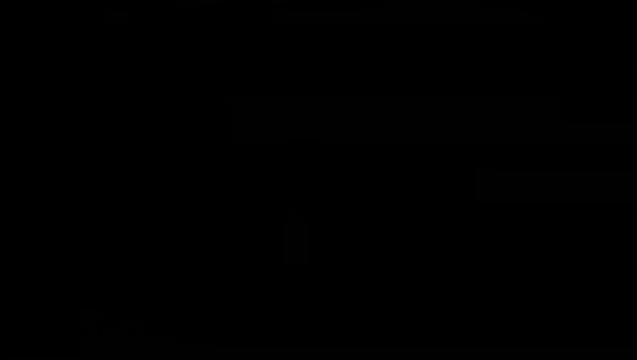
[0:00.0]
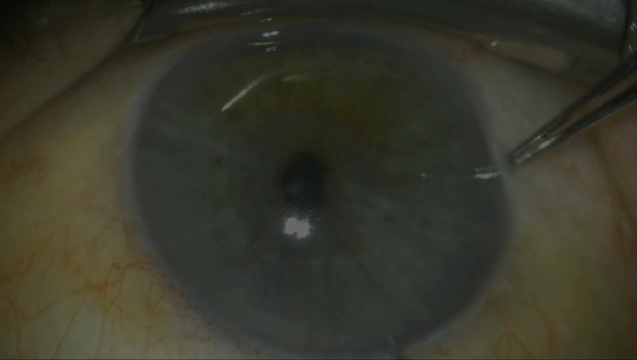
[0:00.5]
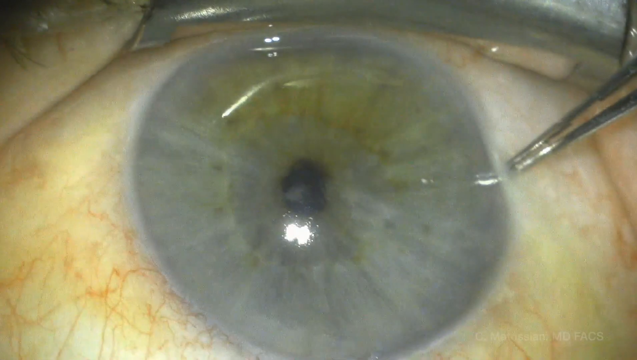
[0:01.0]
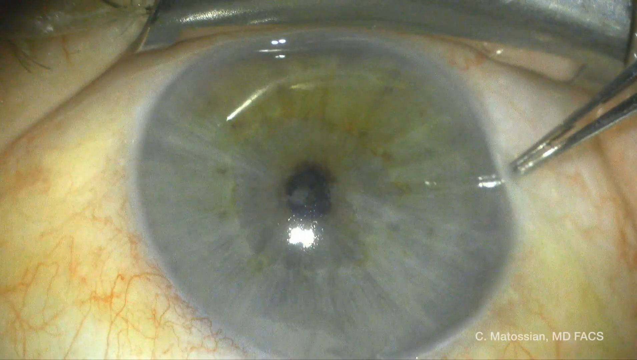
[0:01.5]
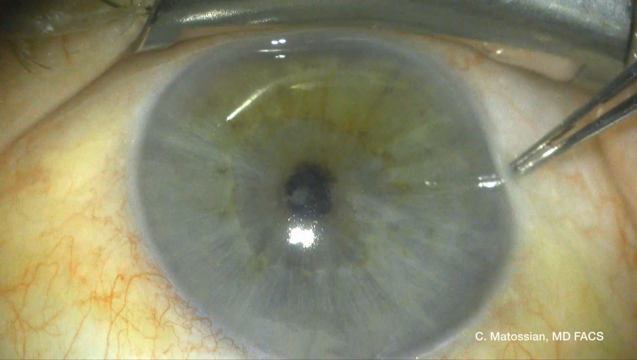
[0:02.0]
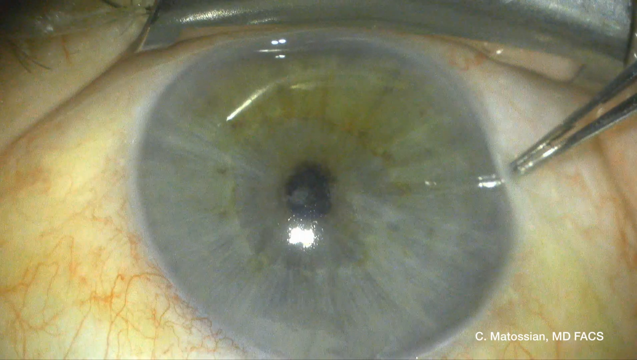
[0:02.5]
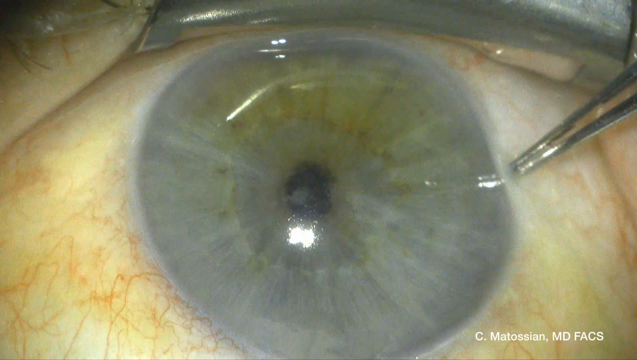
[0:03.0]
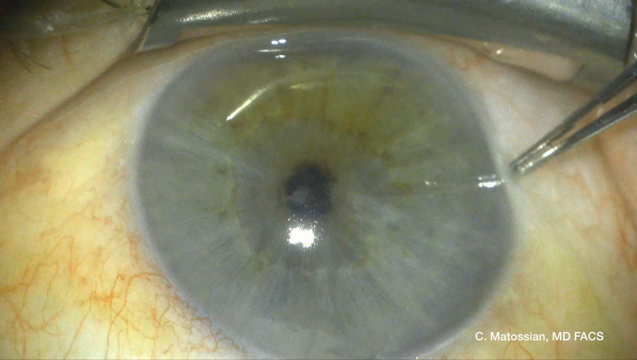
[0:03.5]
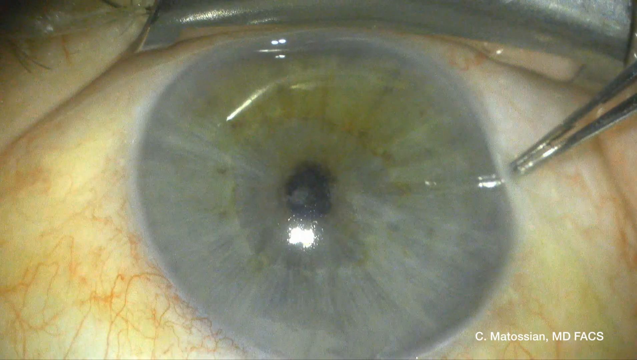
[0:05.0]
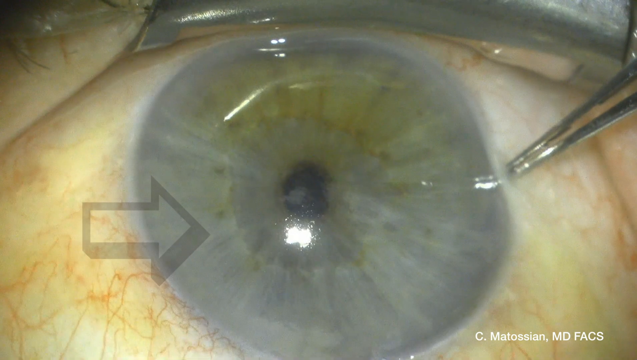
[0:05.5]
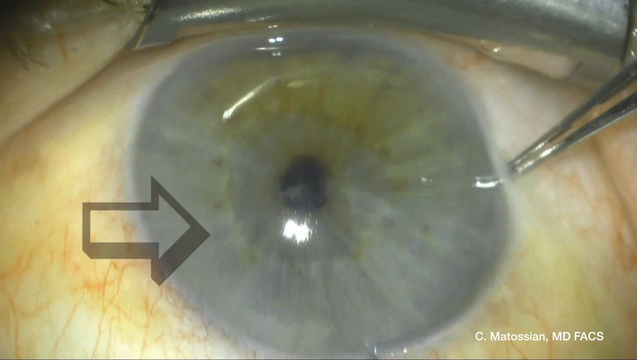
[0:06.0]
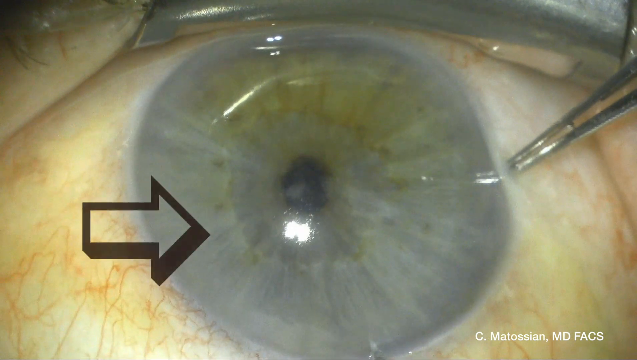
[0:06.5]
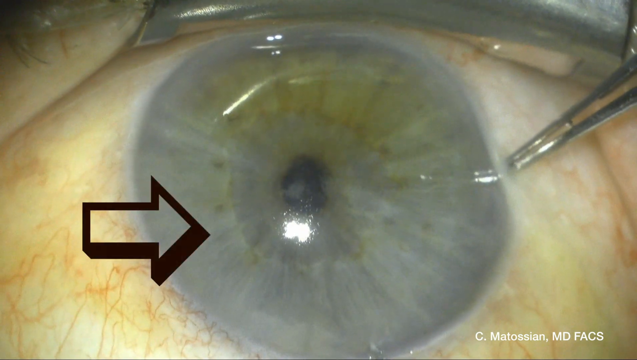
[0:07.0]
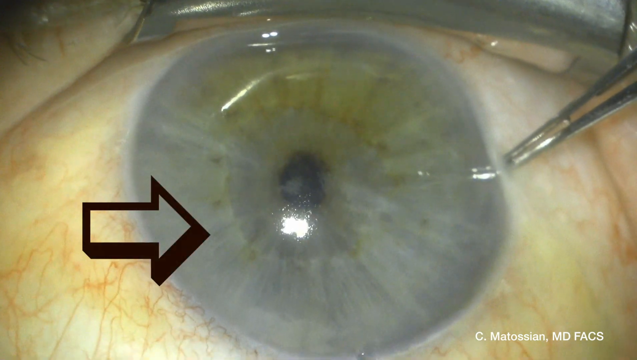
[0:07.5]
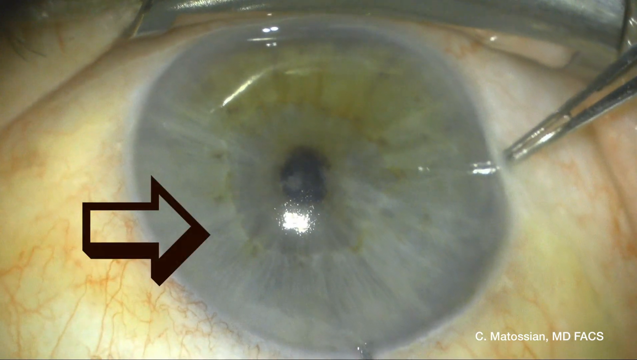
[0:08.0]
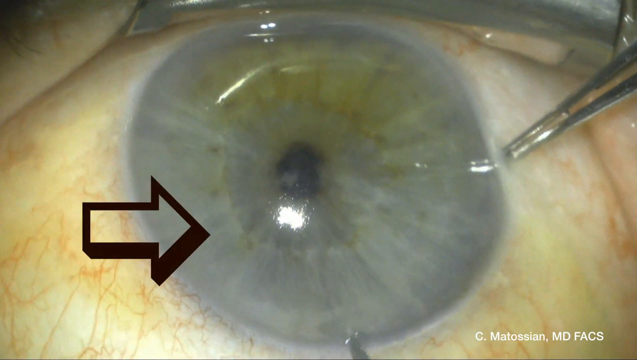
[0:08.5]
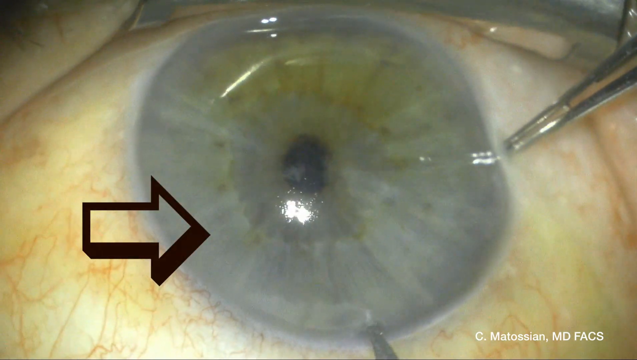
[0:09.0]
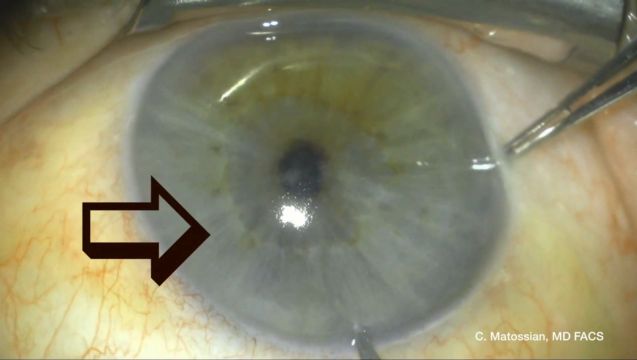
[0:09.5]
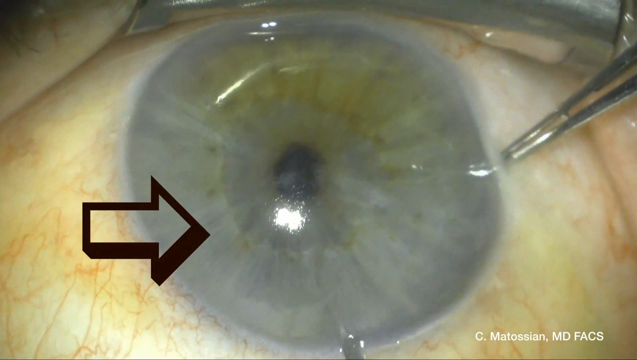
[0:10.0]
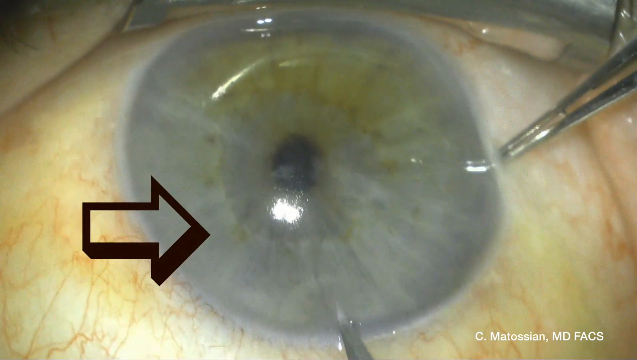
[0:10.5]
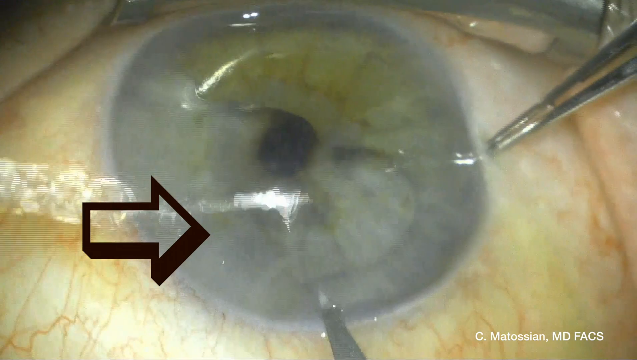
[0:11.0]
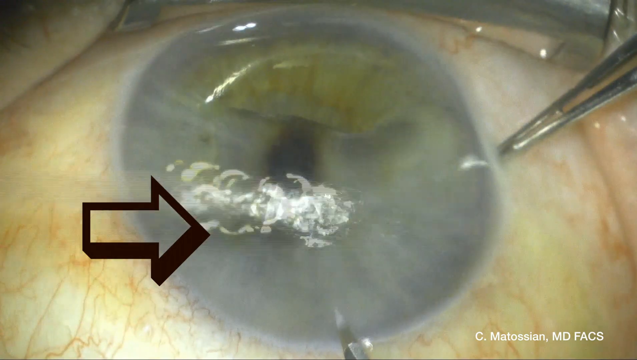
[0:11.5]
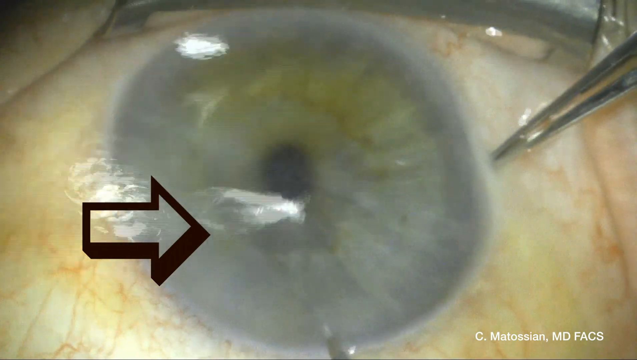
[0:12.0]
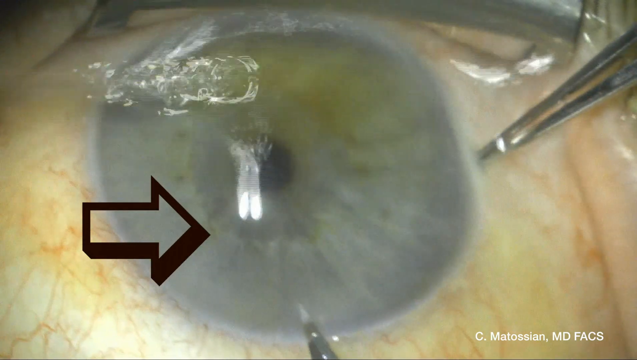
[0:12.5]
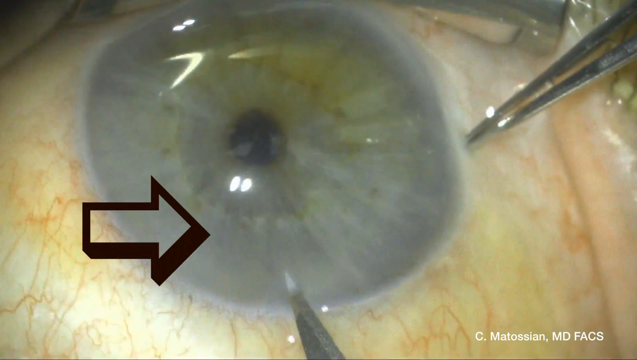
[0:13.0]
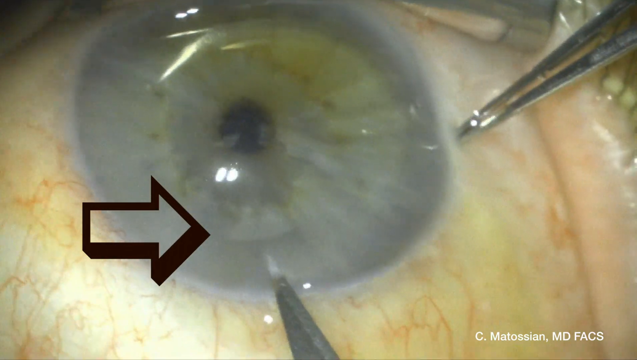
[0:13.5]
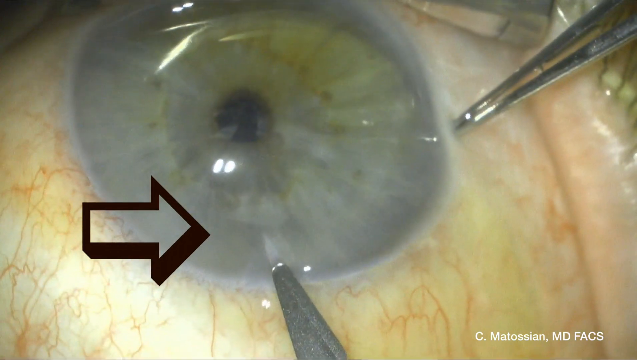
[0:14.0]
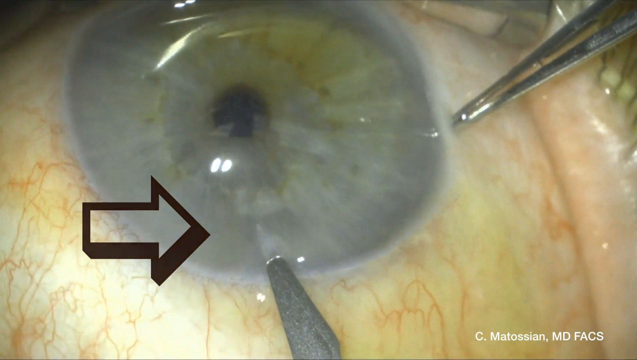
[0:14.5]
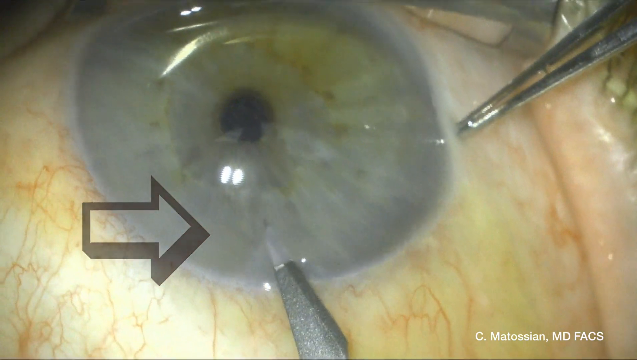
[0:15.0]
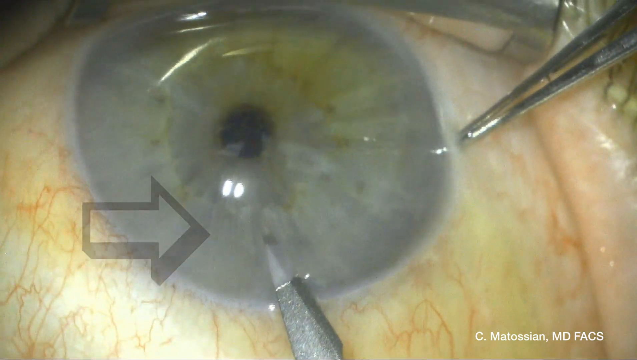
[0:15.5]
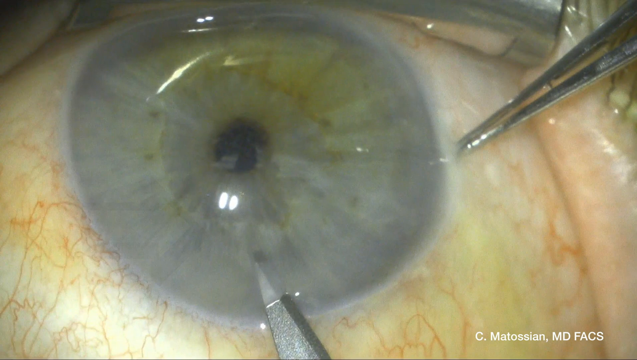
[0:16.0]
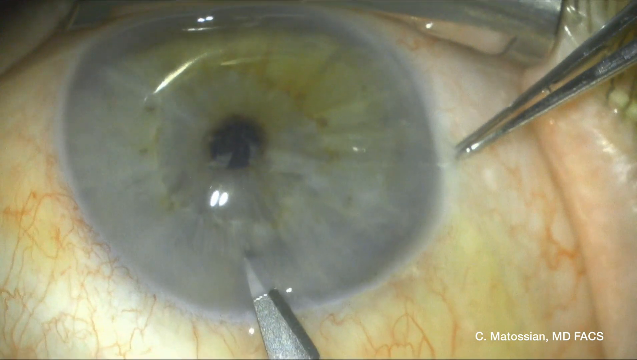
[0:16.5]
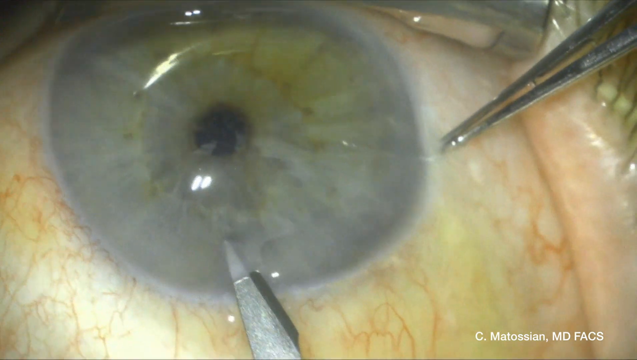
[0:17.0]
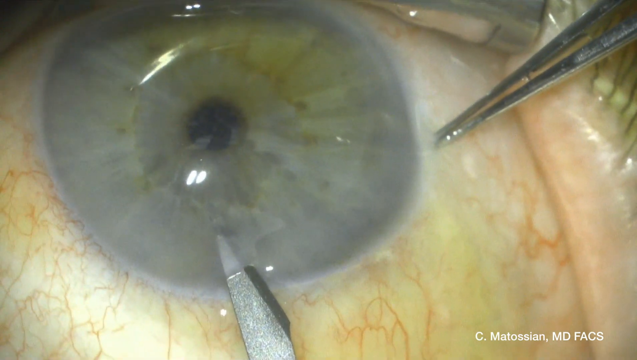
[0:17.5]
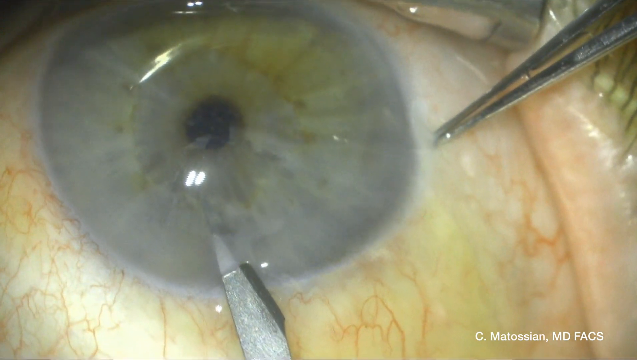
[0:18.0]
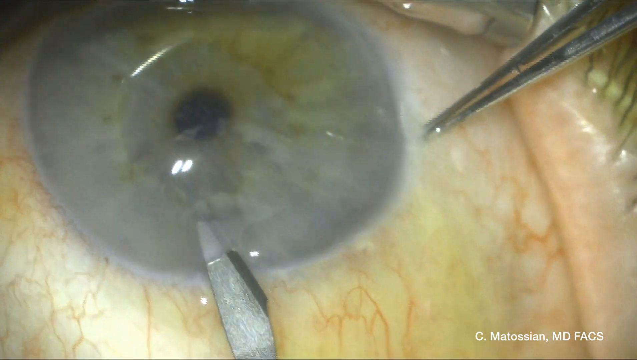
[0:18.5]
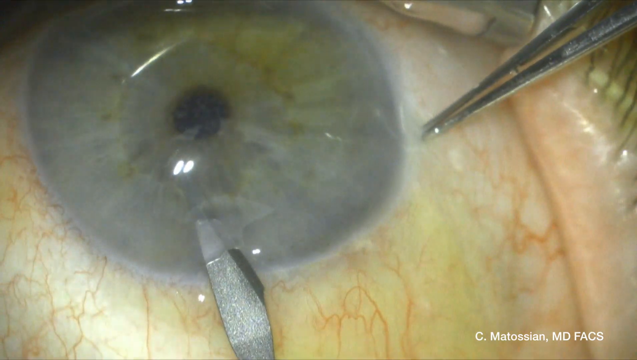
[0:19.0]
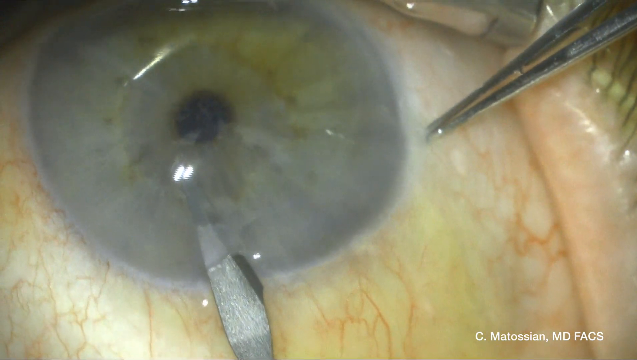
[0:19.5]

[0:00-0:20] The video shows a blue eye, with the pupil, iris, sclera and eyelid visible. Above the eye is a metal piece, and to the right is a metal plier, or two metal pieces, poking into the right side of the eye. At the bottom of the frame is the text "C. Matossian, MD FACS". On the left side a clear circle appears with a clear right arrow with a black outline, pointing toward the blue part of the eye. Water is squirted from the left side and continues to be squirted in a circular, counterclockwise path around the blue part of the eye. A metal point or tool presses into the eye at the bottom of the blue part, inserting itself into the eye and slowly pushing forward twice.